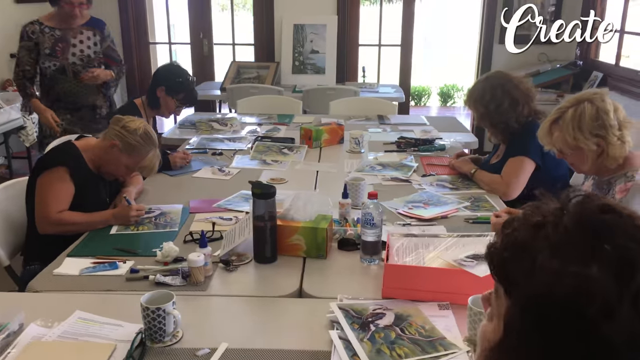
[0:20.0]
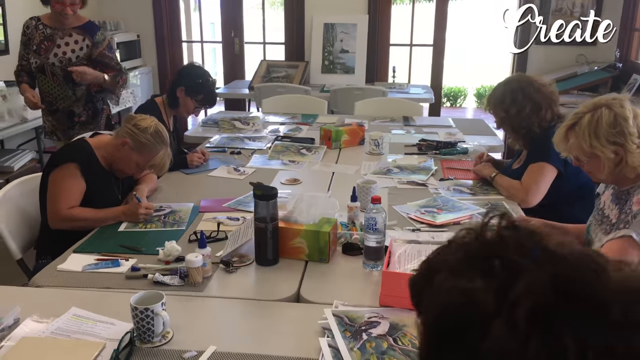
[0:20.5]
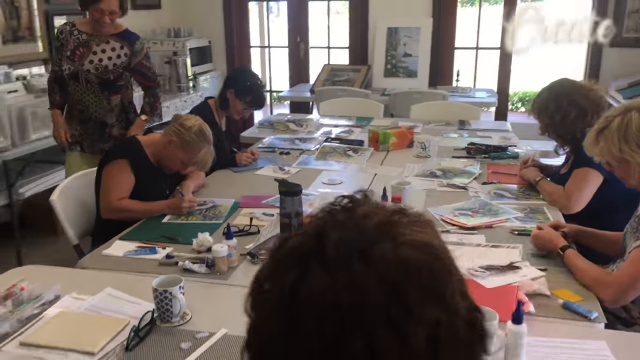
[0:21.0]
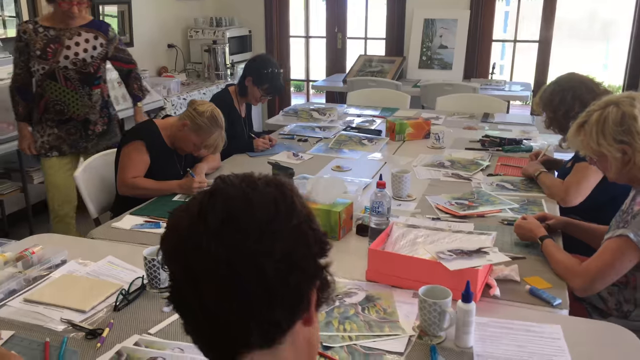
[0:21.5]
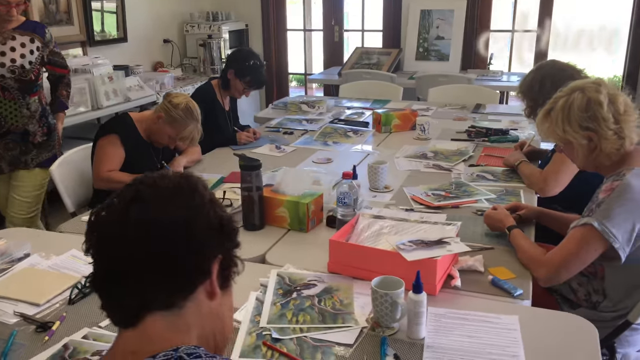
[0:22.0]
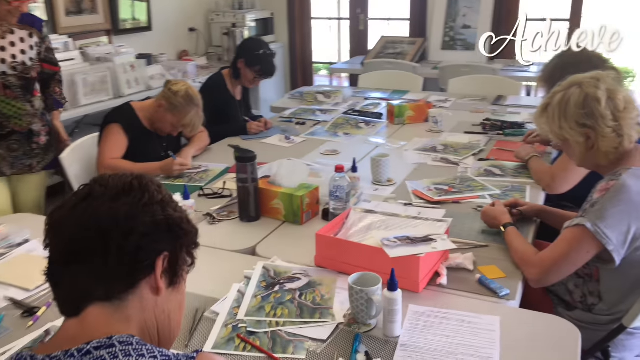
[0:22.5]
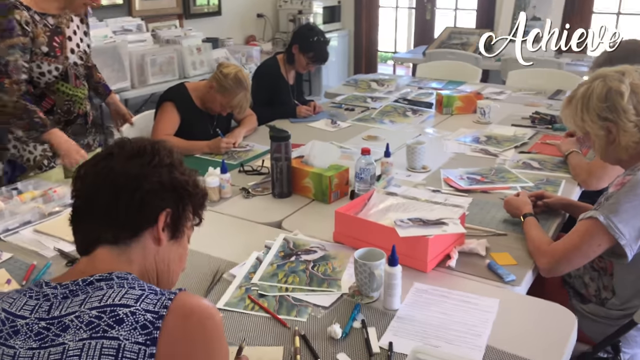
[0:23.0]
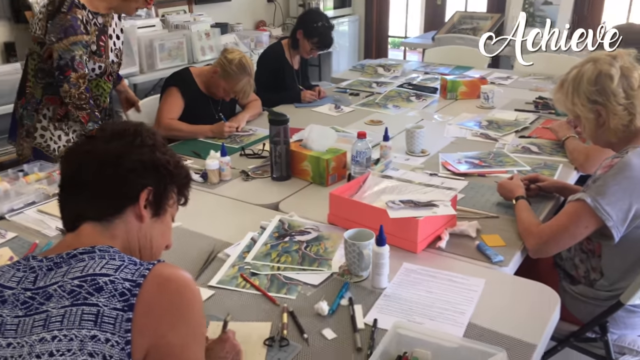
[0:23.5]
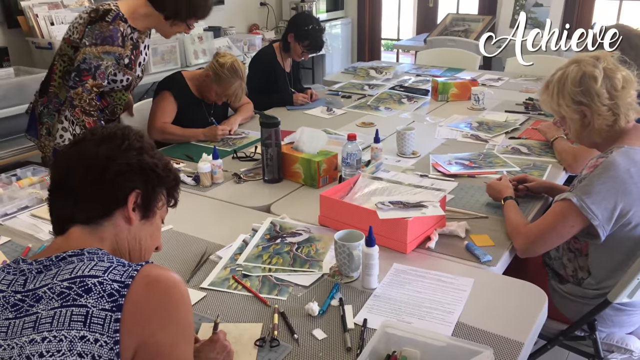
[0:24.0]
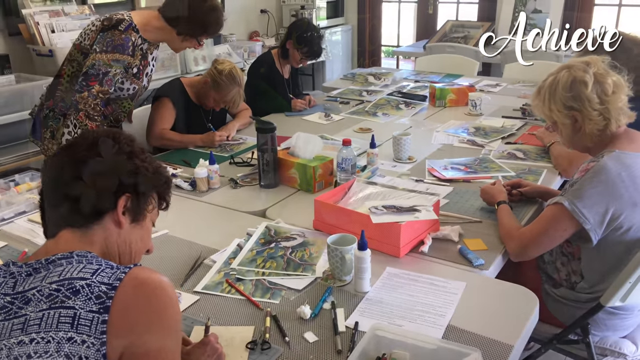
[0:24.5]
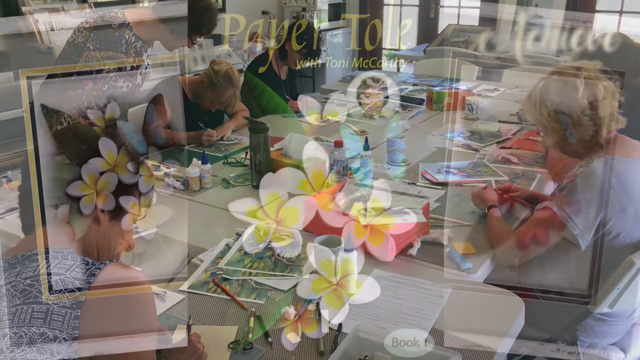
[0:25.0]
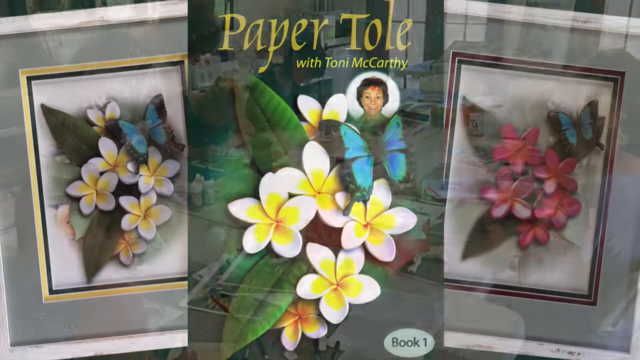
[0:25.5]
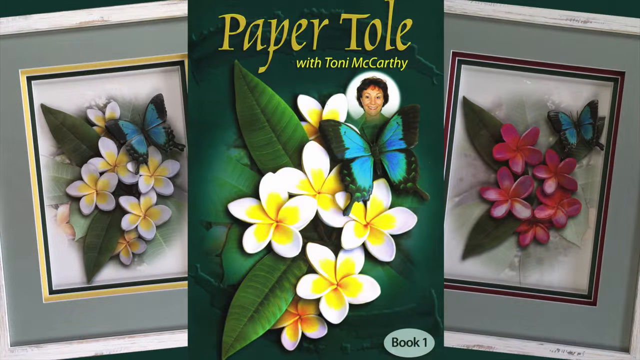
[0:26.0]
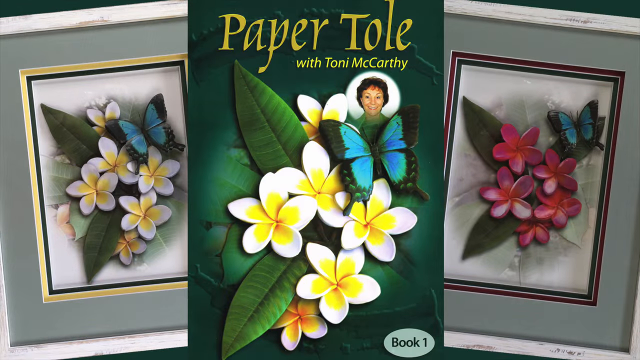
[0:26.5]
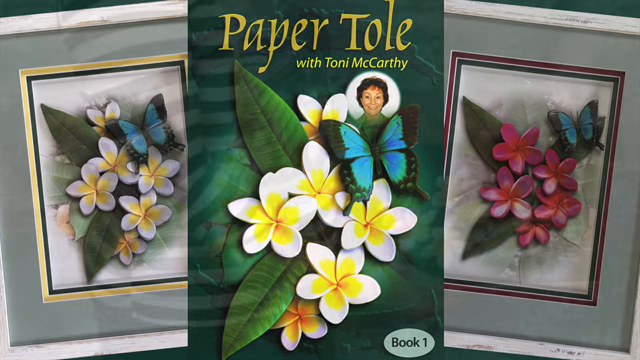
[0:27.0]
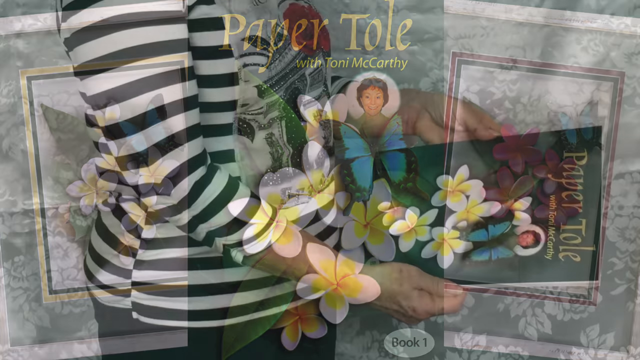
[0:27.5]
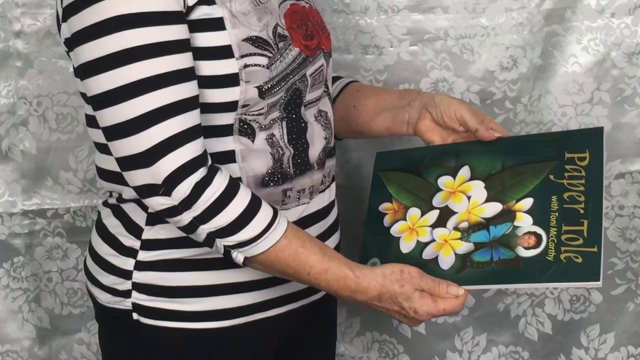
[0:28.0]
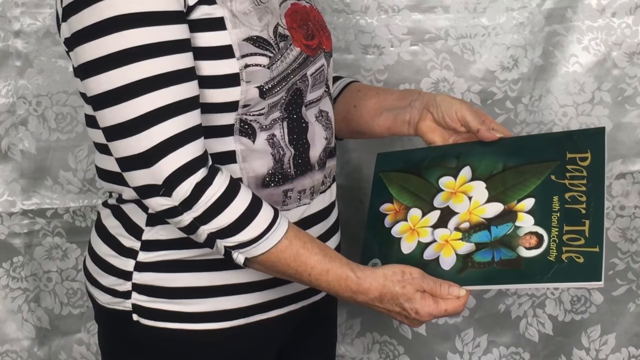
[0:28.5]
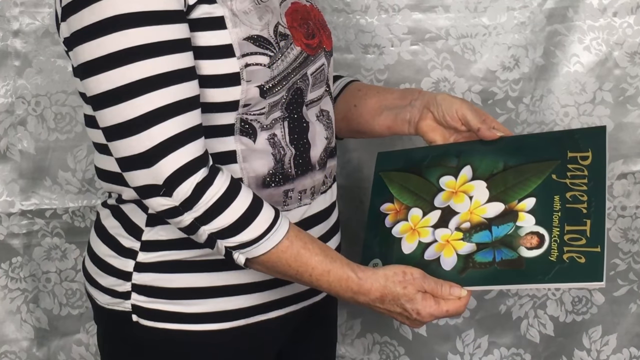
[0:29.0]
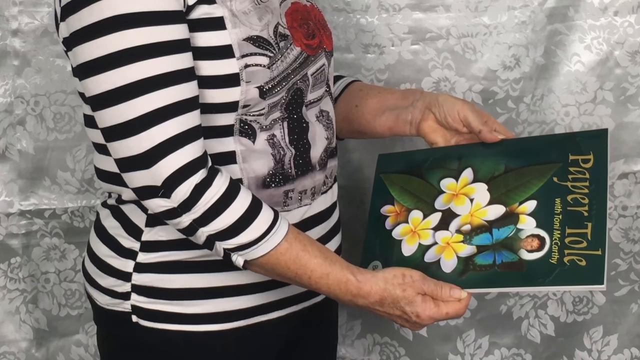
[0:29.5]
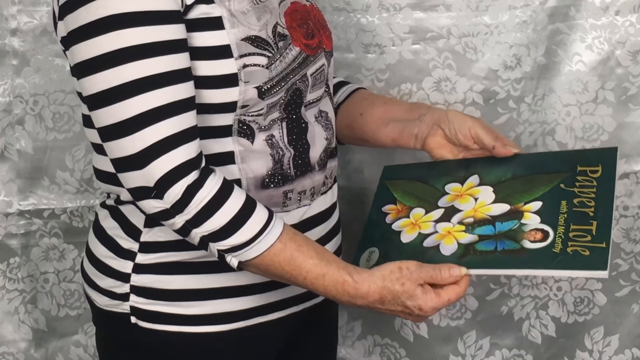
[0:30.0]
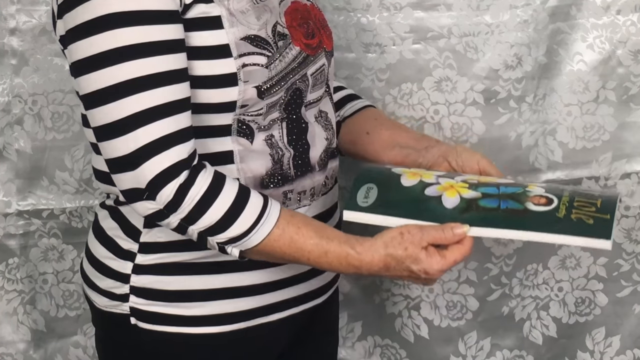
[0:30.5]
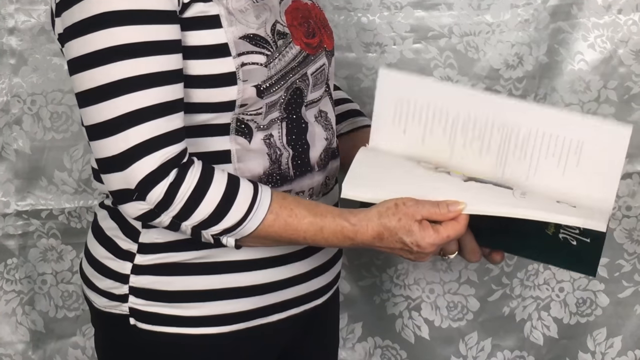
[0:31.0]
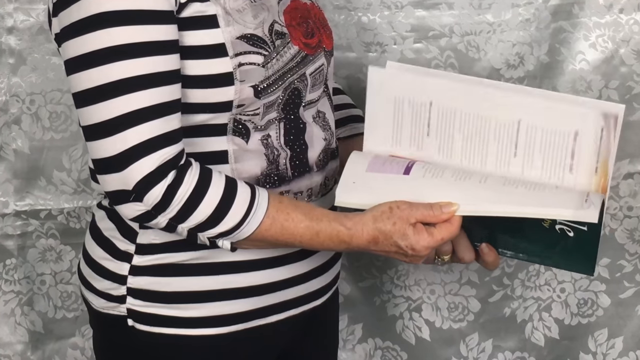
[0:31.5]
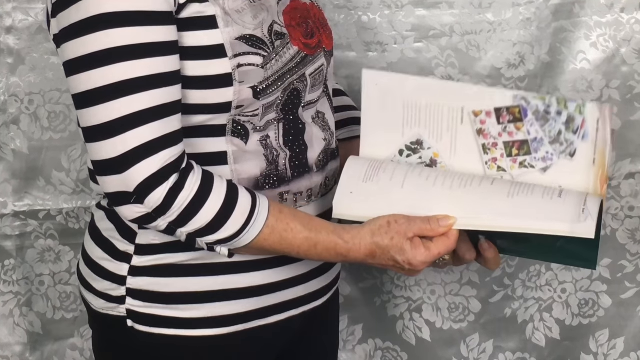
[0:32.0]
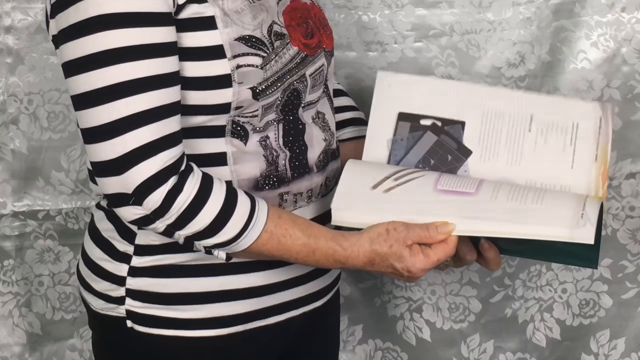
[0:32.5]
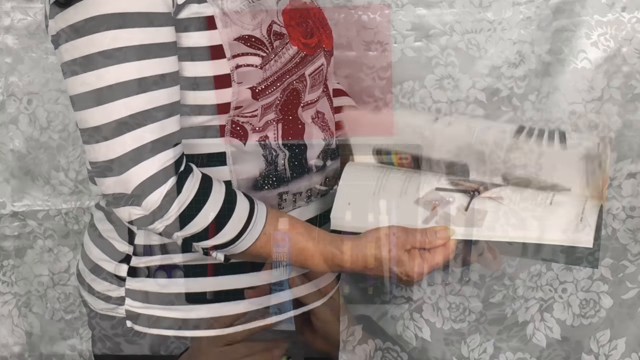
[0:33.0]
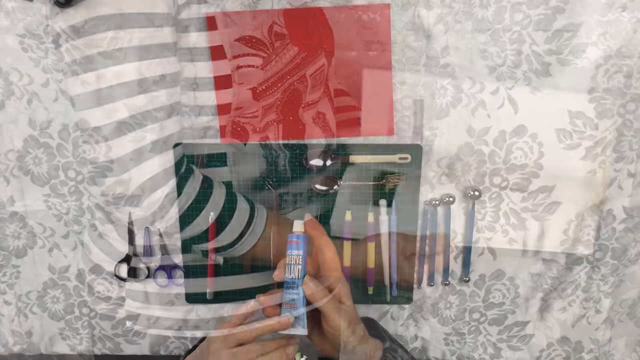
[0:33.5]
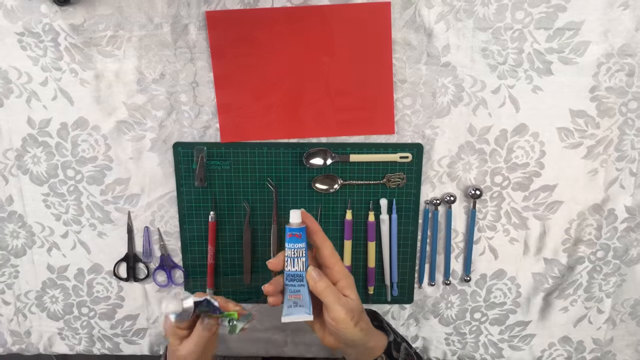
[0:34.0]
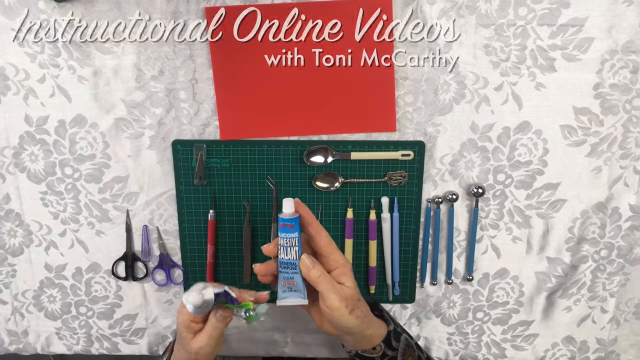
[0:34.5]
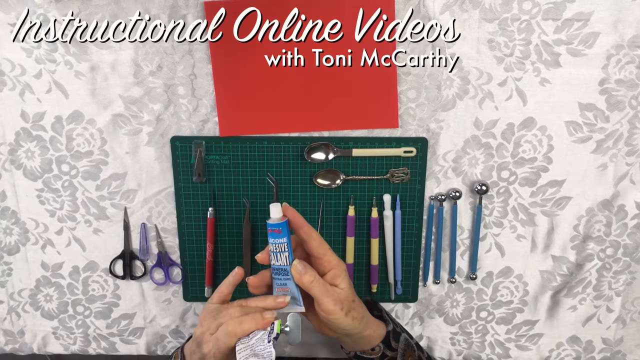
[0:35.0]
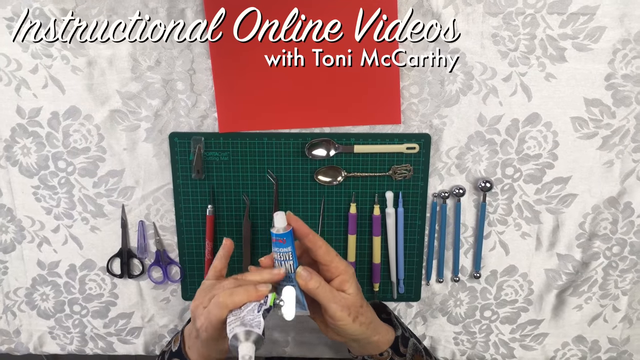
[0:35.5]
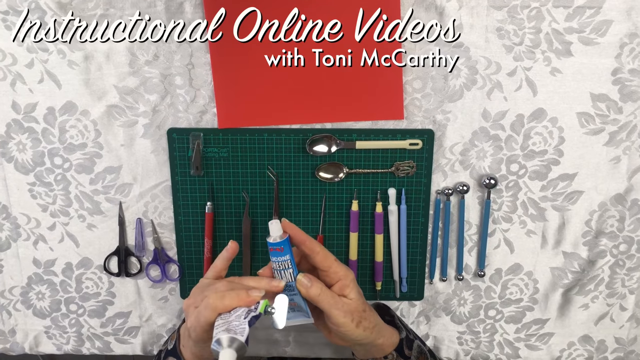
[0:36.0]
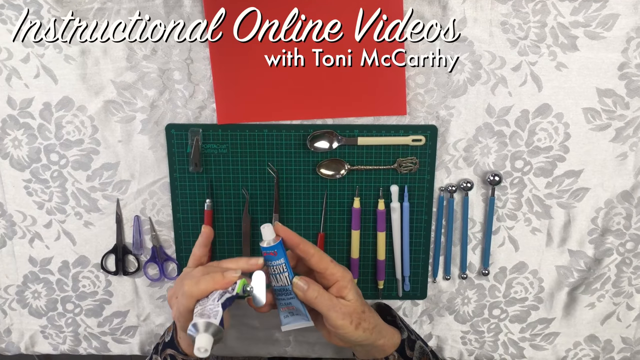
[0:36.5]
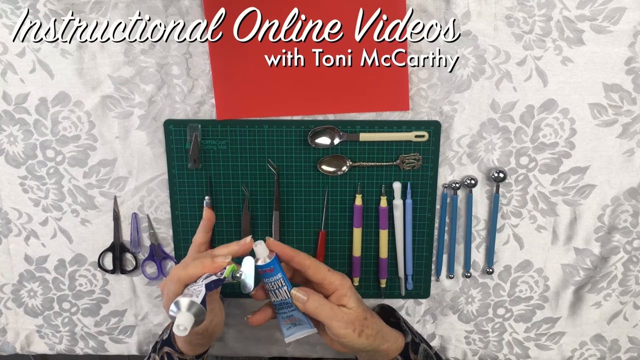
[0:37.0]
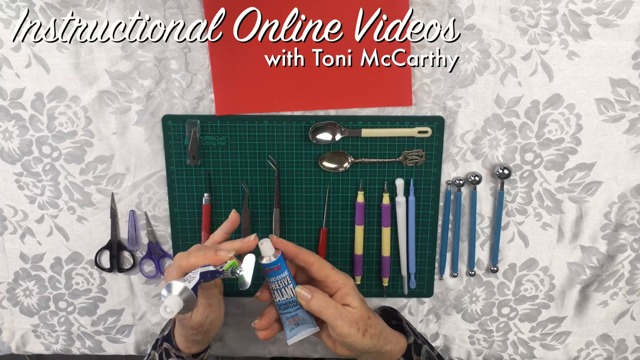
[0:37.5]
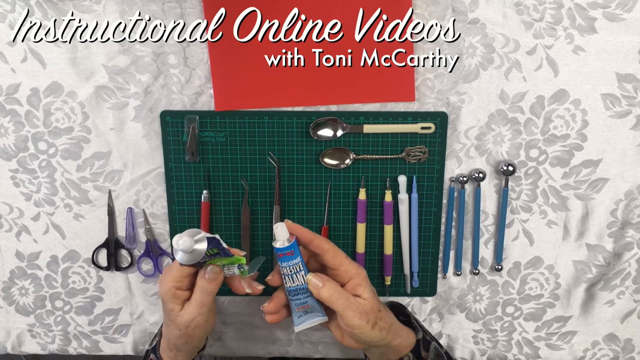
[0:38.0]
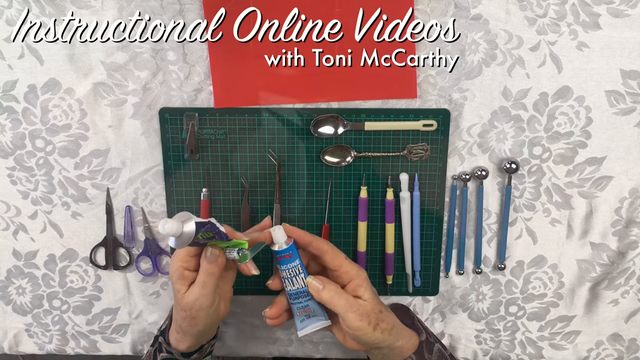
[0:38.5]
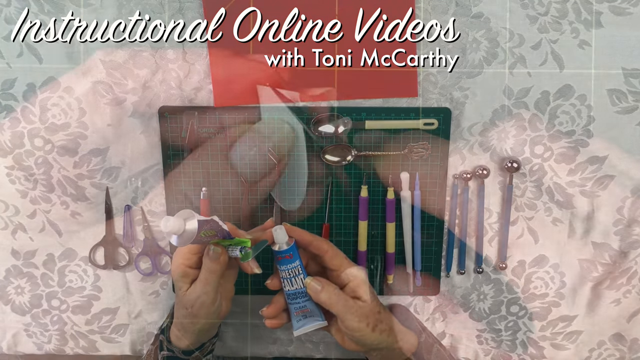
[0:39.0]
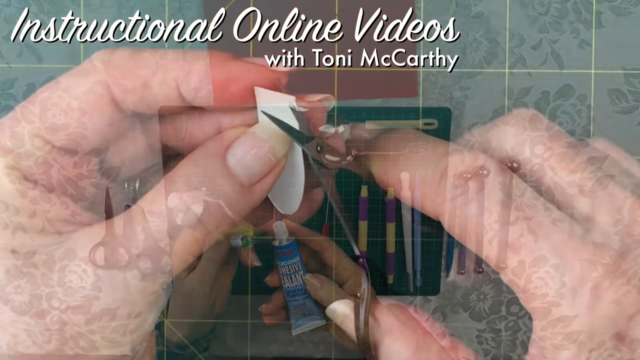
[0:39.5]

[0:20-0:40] A well-lit room is shown with a table in the middle and students sitting around it, drawing something seriously. Various objects are on the table, such as a water bottle, glue, papers and pens. All the students are middle-aged women. The teacher leans towards the second student on the opposite side of the table, looking at their artwork. The screen then transitions to a Paper Tole with Toni McCarthy book at the center, its cover showing flowers, a butterfly and leaves along with the teacher's image. On both sides of the book, flowers, a butterfly and a leaf are framed in a rectangular frame. After another transition, the woman in the black and white striped t-shirt, probably the teacher, holds the book; only her torso and hands are visible. She opens the book and flips through it rapidly, showing the contents inside. The screen then transitions to a white lace-like cloth on a table, on which various art equipment is kept, such as glue, a cutting board, scissors, tweezers and red paper dotting sticks. At the top of the video, "instructional online videos with Toni McCarthy" is written in cursive letters. The teacher holds a gum tube in both hands, with only the hands visible, and then the teacher is shown cutting a small paper.